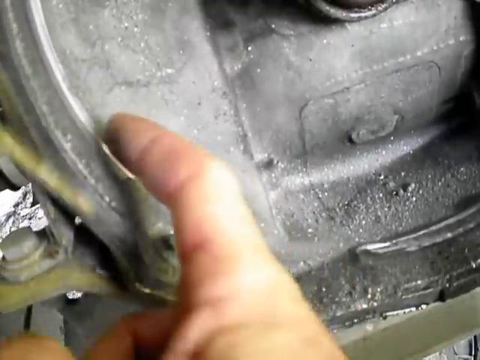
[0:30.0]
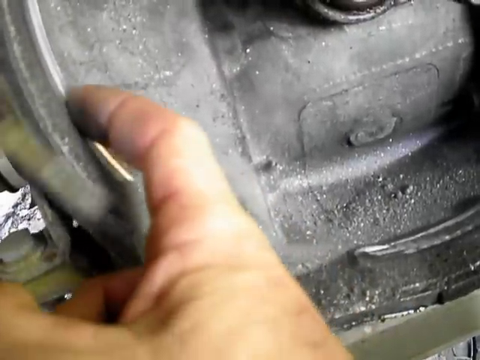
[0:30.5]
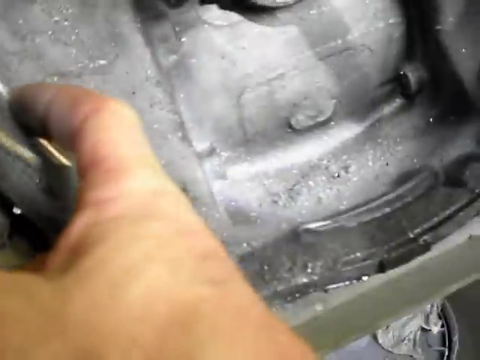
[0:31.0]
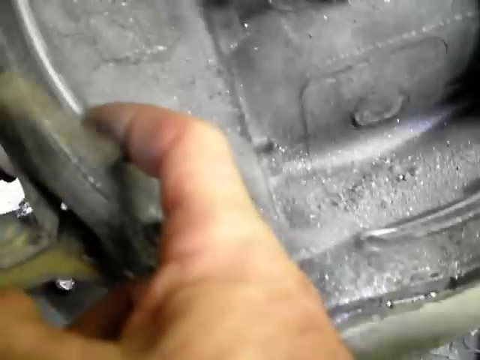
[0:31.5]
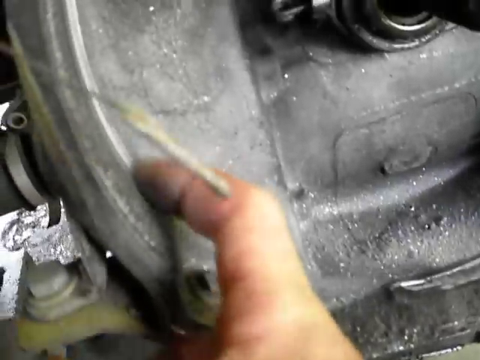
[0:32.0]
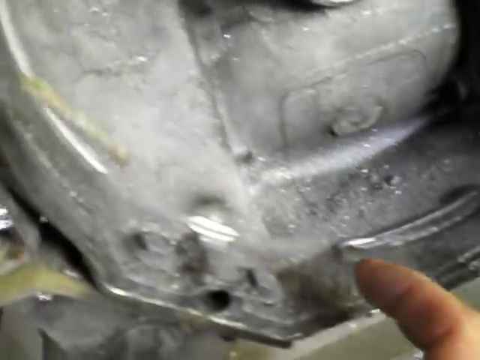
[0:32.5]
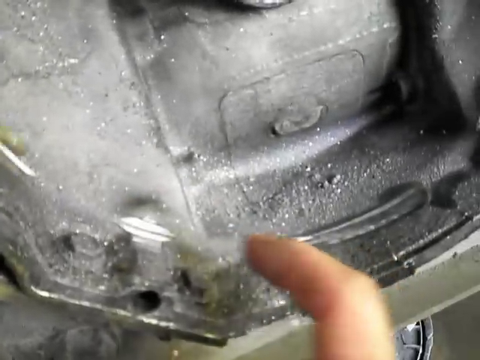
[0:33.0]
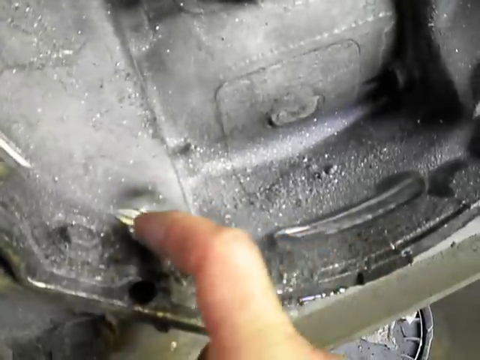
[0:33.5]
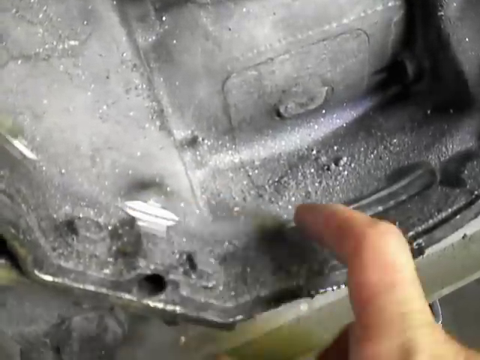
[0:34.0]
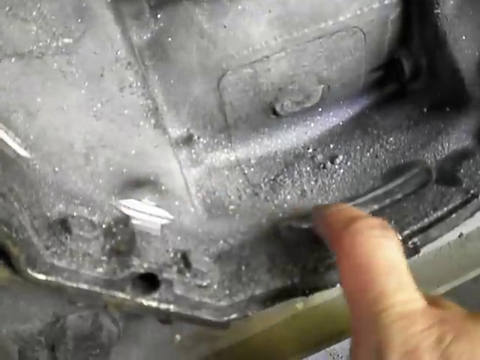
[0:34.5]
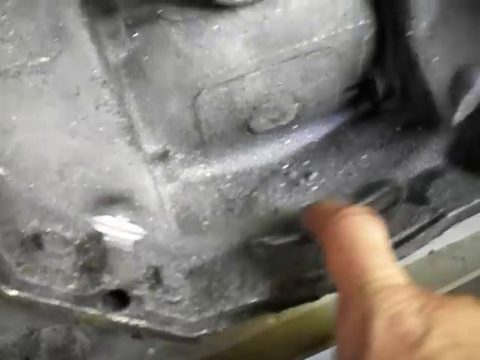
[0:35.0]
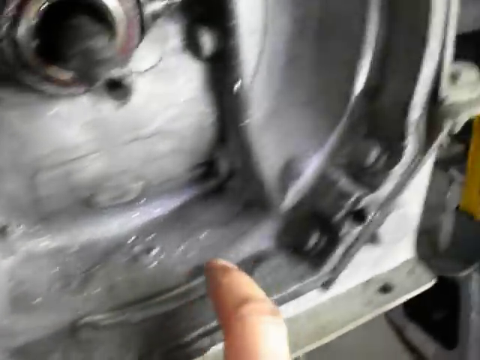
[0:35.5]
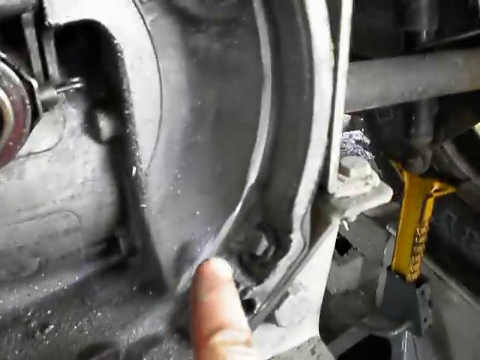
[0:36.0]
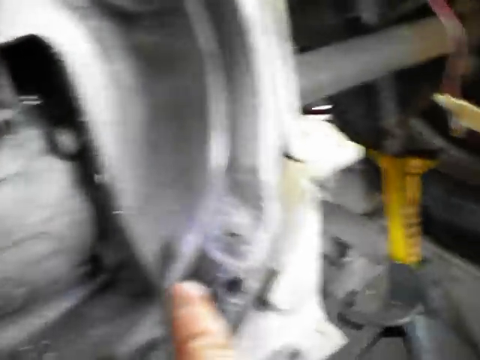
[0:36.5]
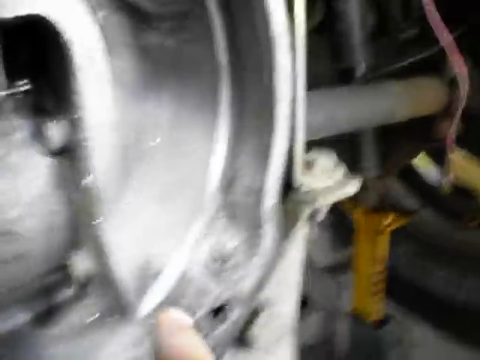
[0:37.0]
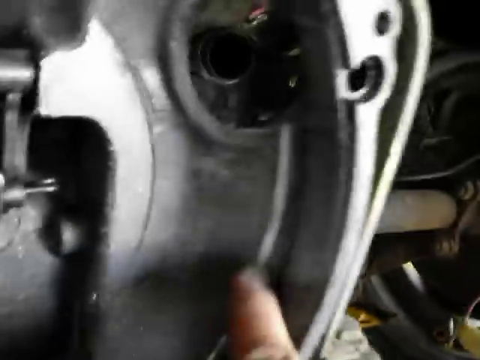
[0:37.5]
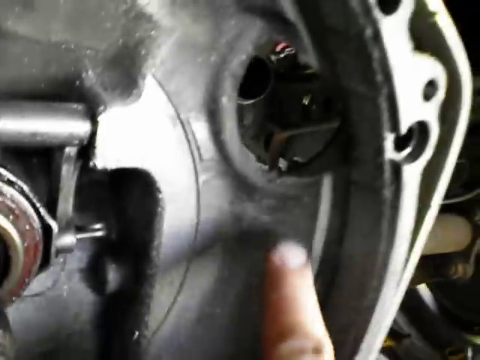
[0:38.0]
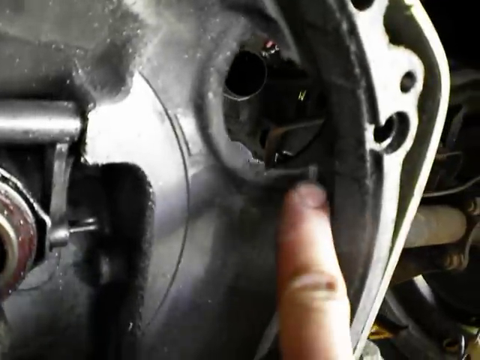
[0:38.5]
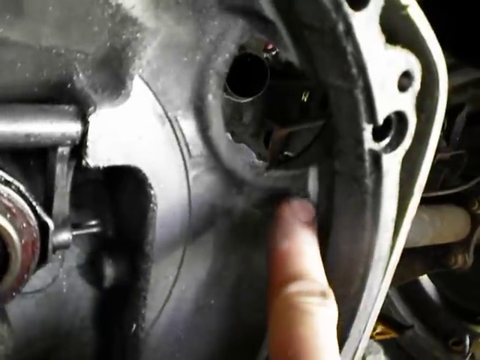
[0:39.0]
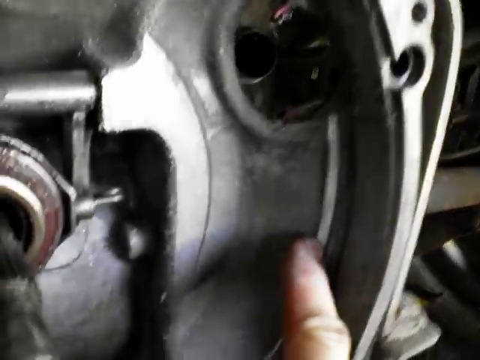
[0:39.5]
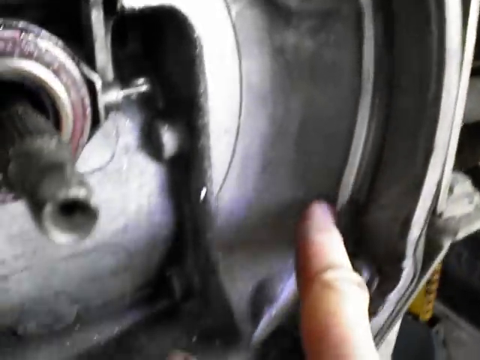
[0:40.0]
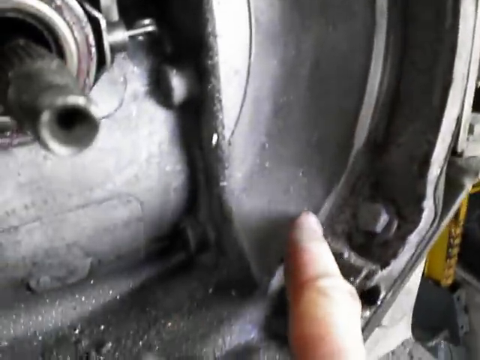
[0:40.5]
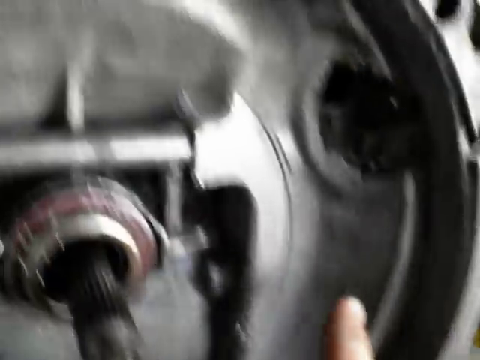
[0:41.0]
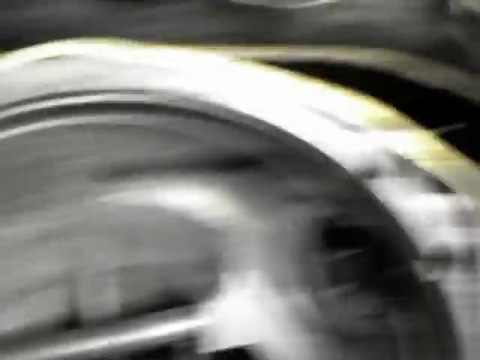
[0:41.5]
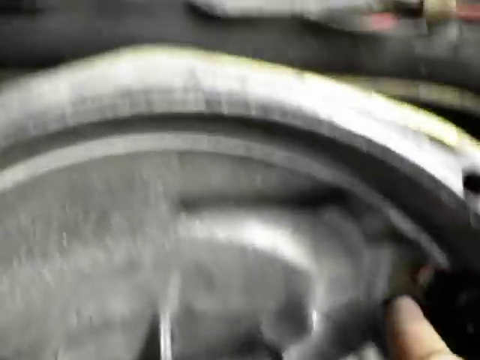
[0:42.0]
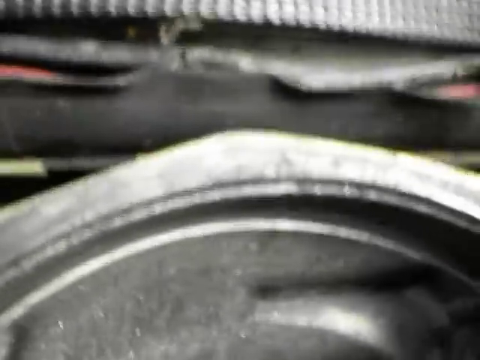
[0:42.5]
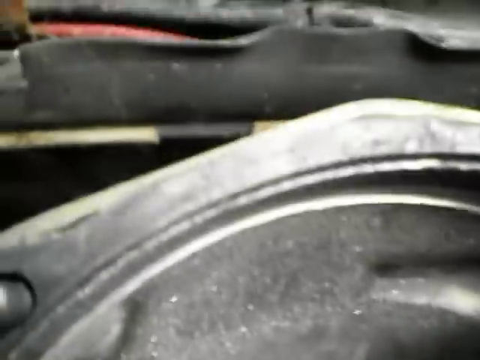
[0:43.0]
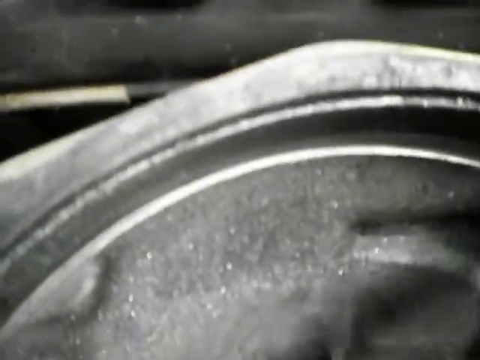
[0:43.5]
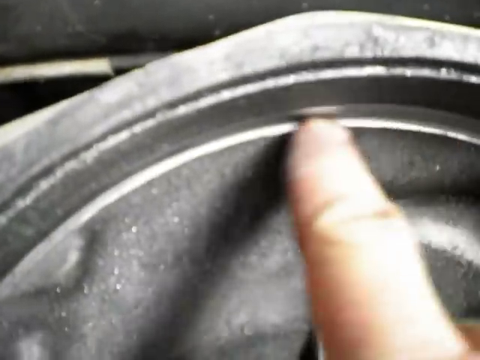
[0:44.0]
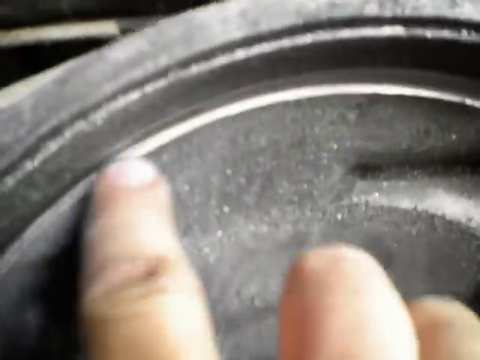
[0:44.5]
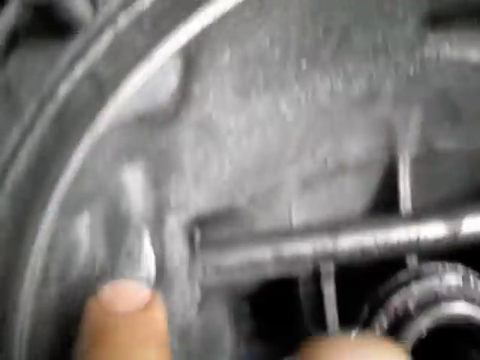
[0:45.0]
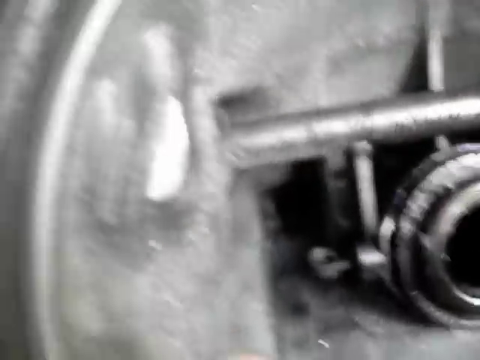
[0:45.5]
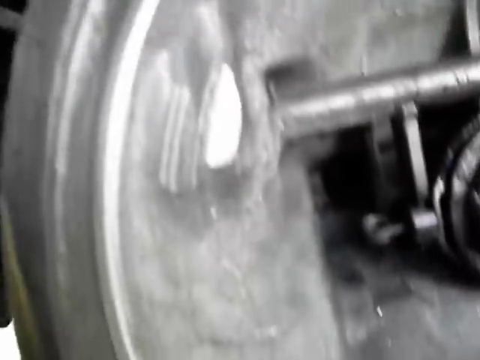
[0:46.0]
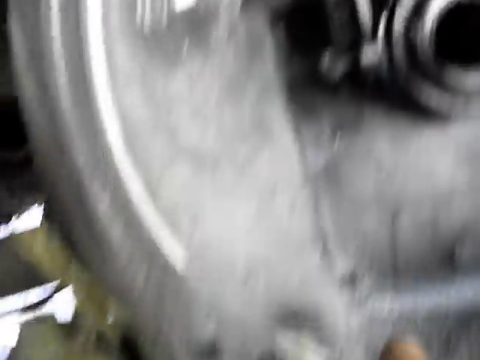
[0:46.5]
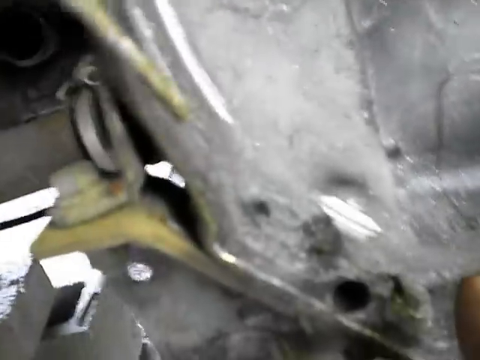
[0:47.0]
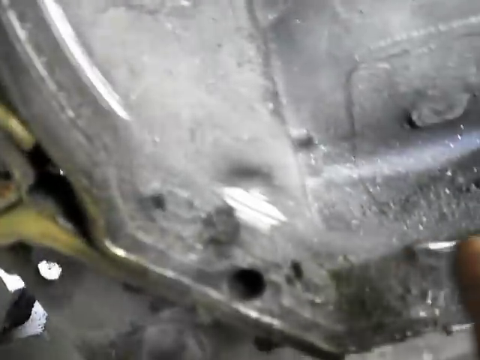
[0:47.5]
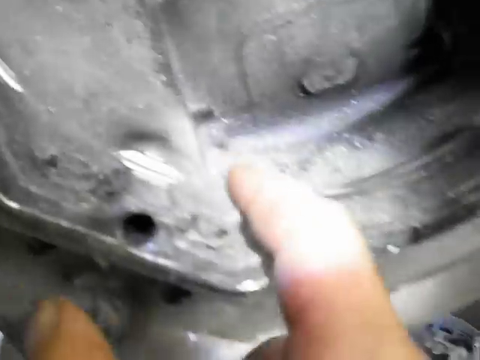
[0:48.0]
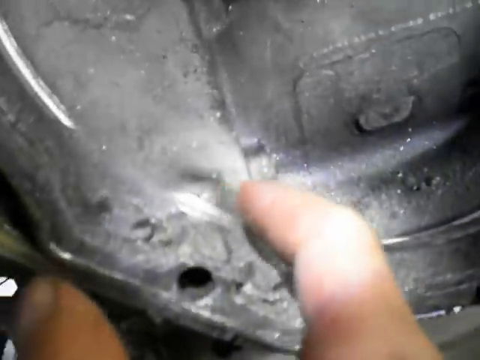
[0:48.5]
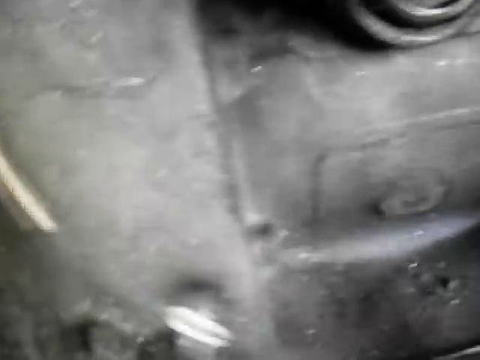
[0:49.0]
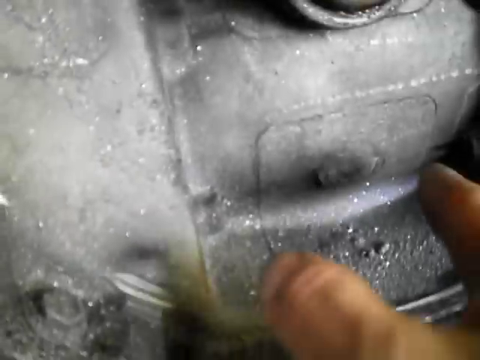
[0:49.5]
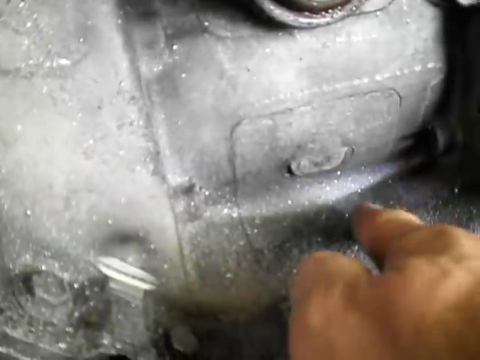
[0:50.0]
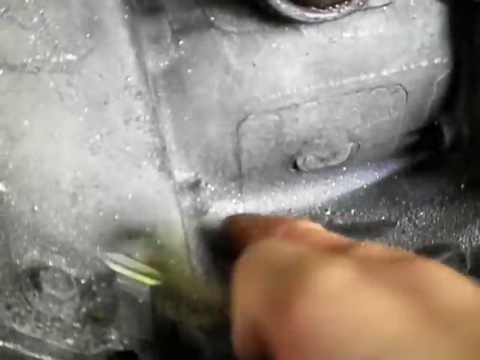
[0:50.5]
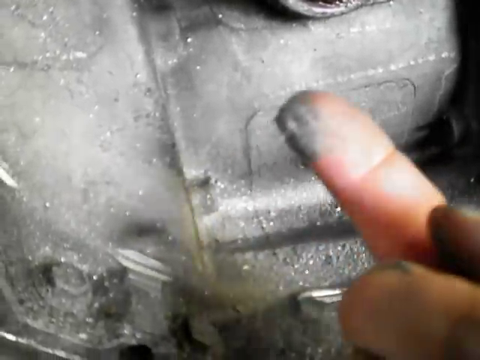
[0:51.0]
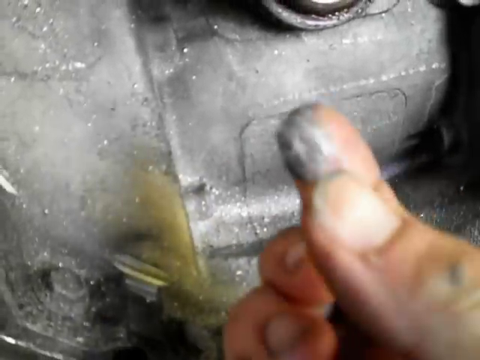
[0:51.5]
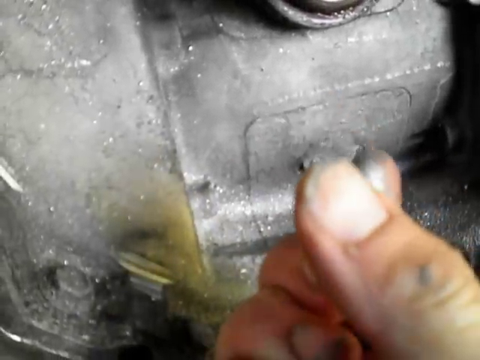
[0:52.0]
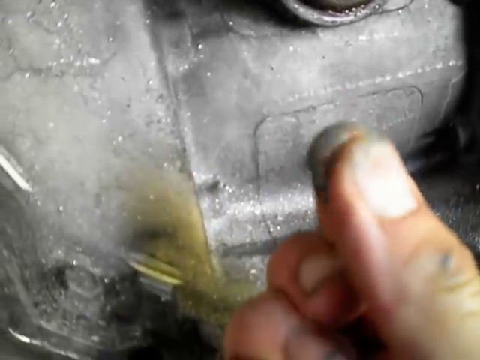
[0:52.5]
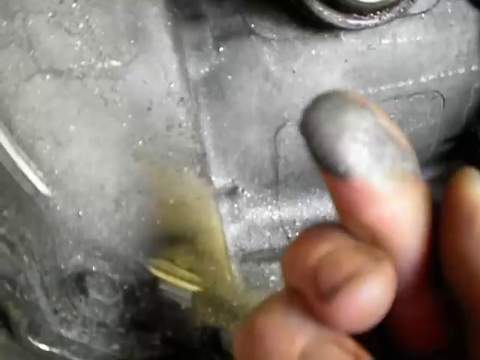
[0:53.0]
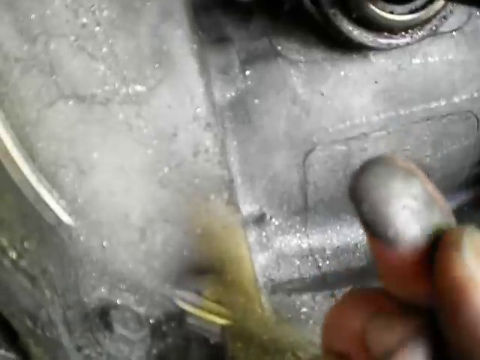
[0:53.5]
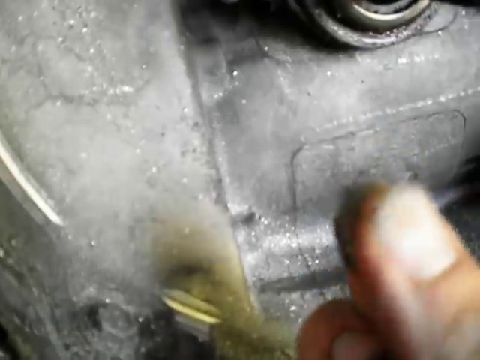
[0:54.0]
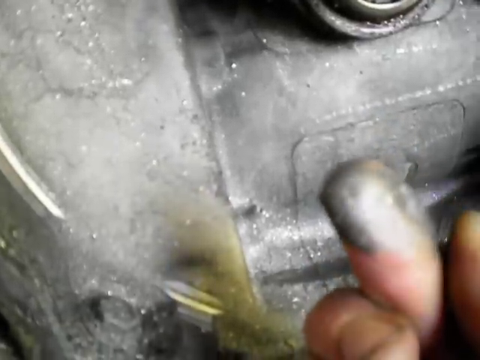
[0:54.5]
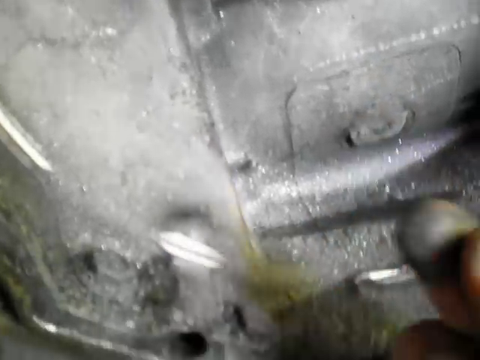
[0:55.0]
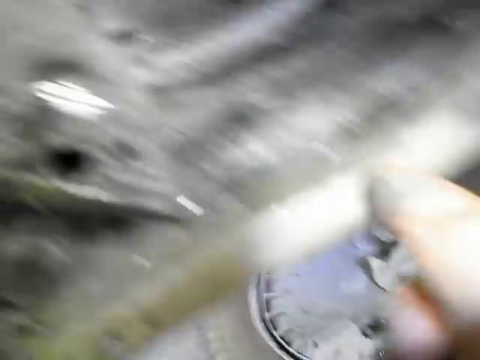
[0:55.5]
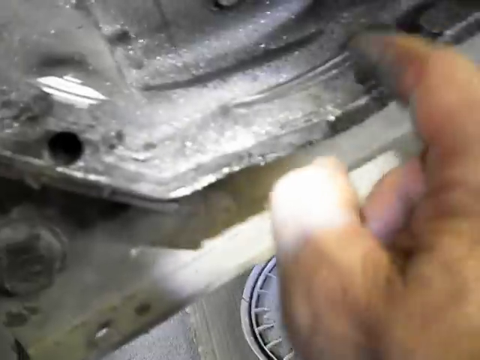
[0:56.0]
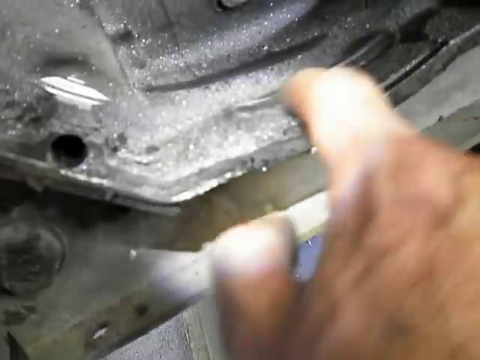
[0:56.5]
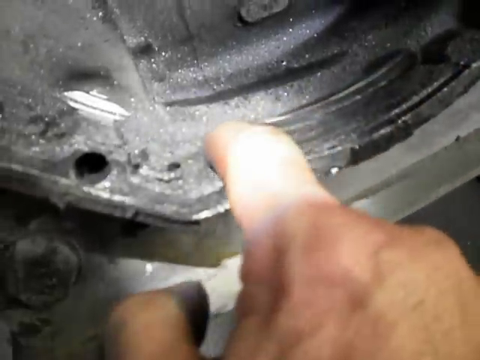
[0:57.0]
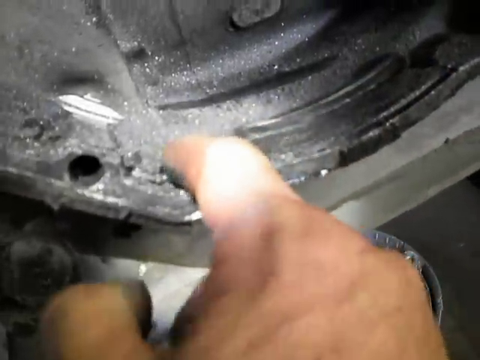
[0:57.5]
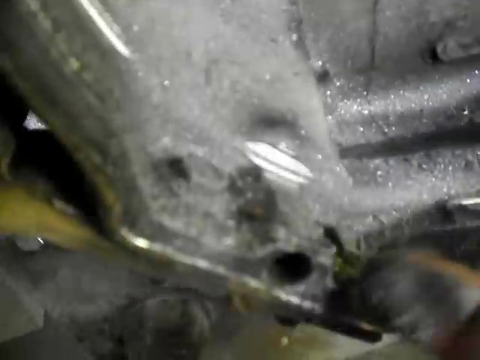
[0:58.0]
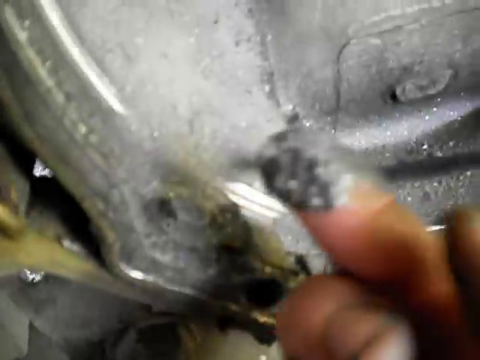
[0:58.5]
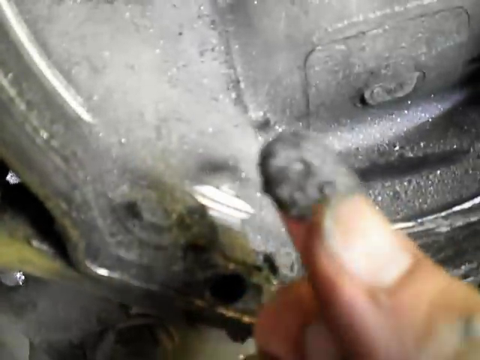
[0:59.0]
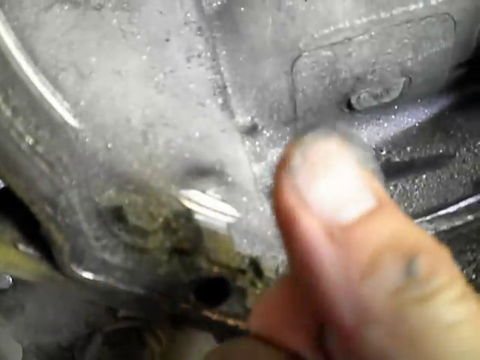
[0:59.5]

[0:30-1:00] Someone holds their hand out and touches the inside of a silver cylinder, apparently also using a flashlight, and points toward what seem to be grooves. They appear to be working on a car in a garage or driveway; bright sunlight shines in and a little grass is visible on the side. The person runs a finger all around the rim and grooves of the silver object, then puts a finger into it, and silver dust gets on their fingertips; it is unclear whether it is dust, residue or paint, possibly a metallic paint. They do this again and get more of the silver dust on their finger.